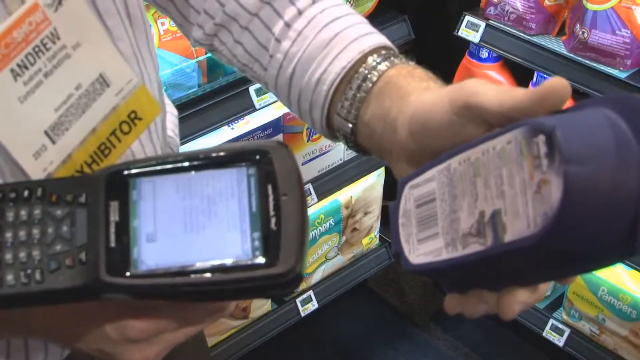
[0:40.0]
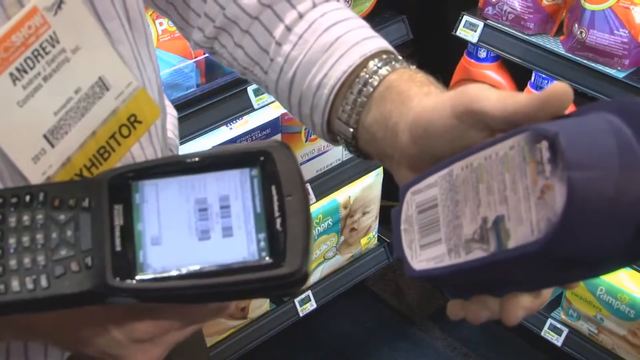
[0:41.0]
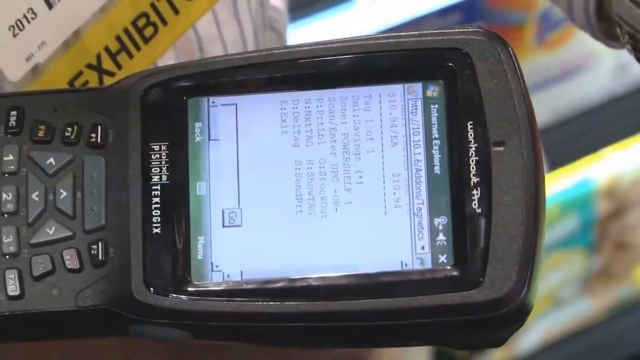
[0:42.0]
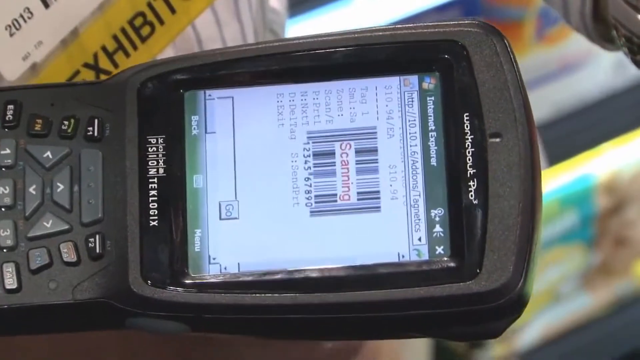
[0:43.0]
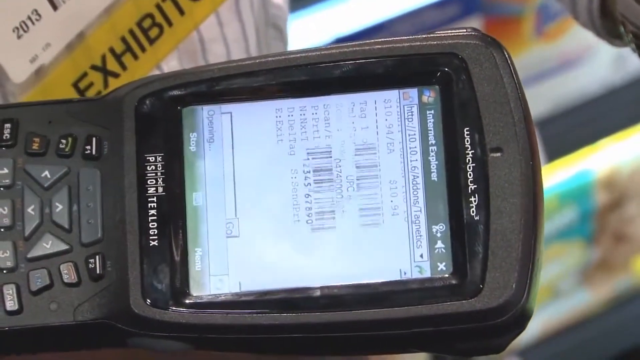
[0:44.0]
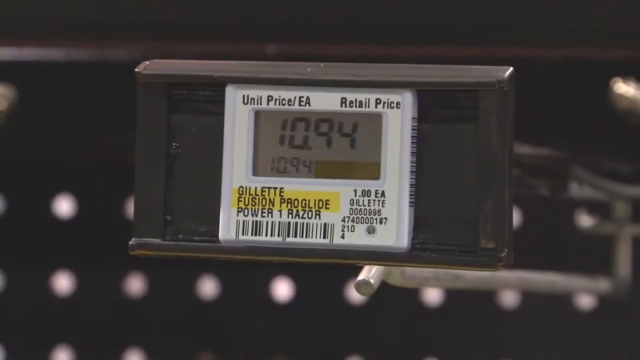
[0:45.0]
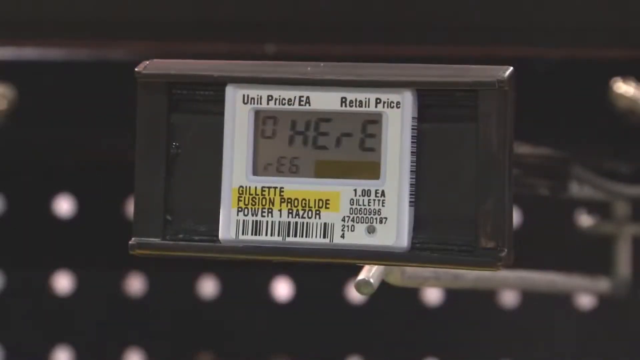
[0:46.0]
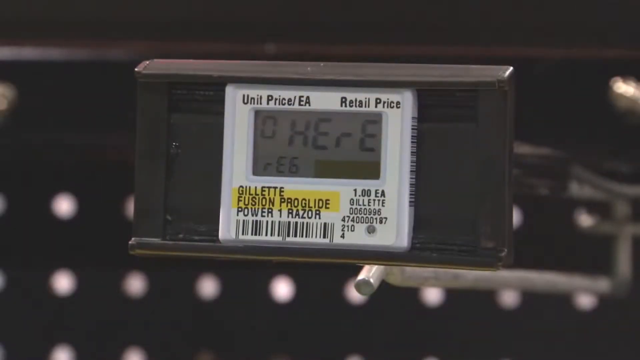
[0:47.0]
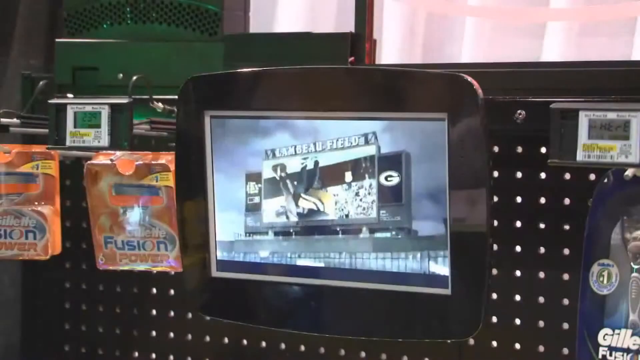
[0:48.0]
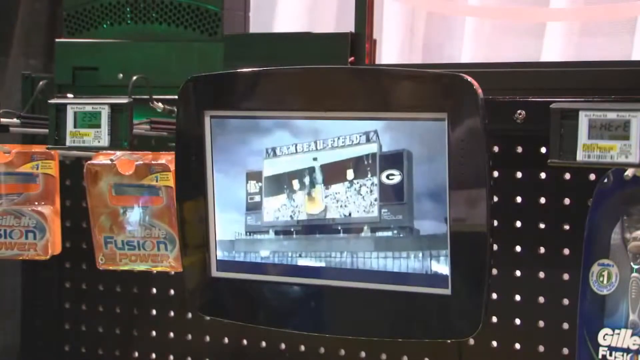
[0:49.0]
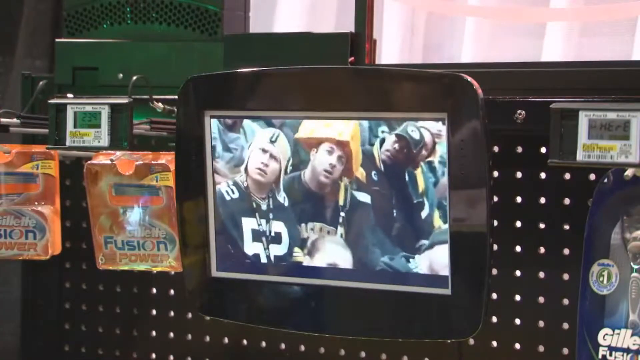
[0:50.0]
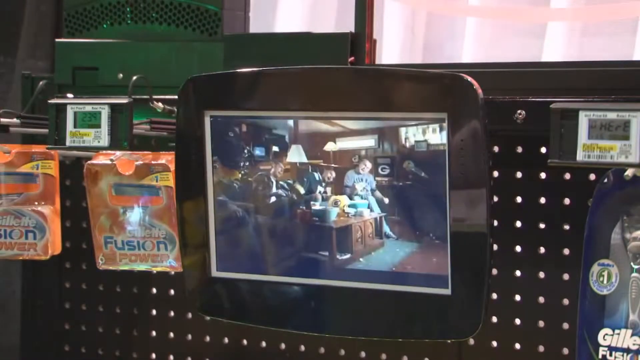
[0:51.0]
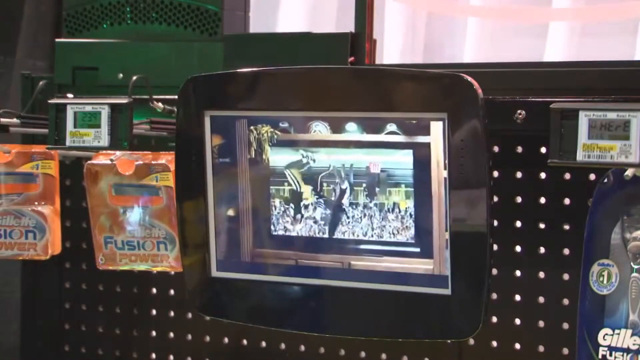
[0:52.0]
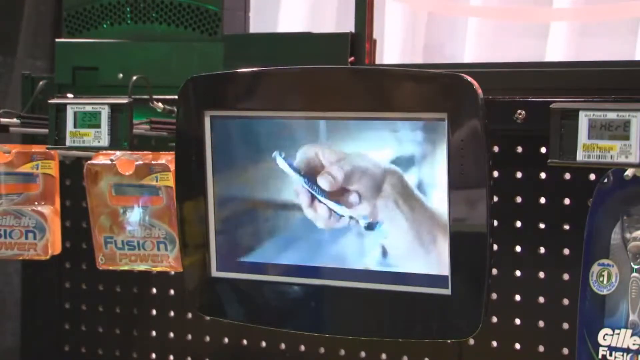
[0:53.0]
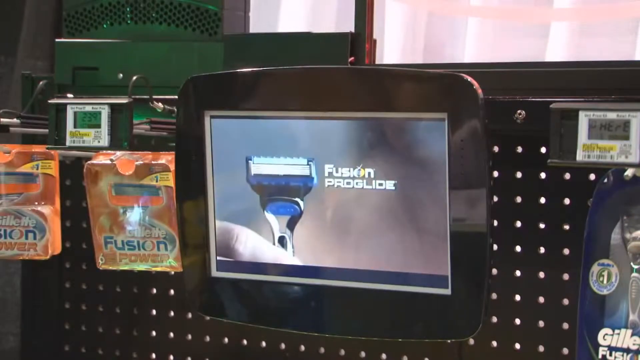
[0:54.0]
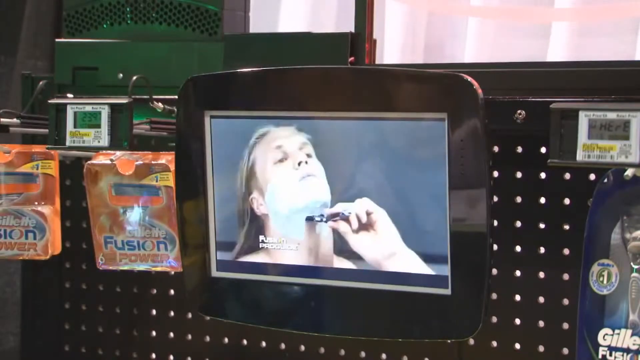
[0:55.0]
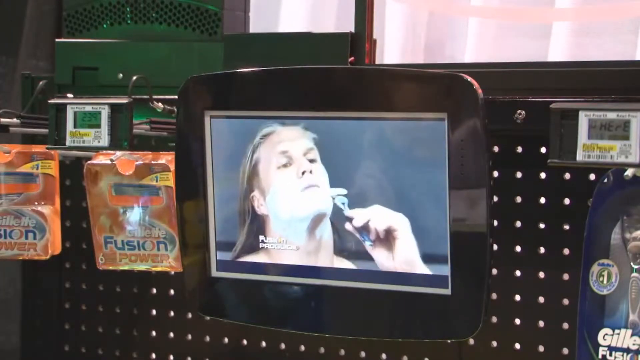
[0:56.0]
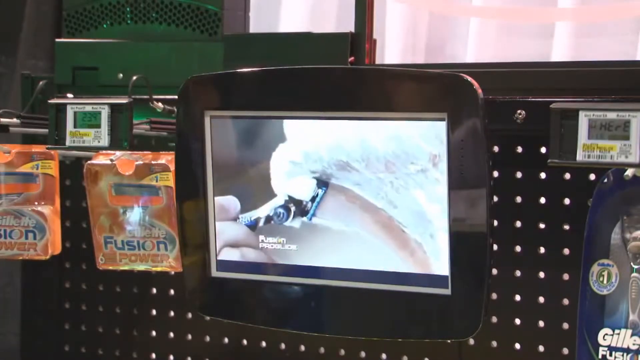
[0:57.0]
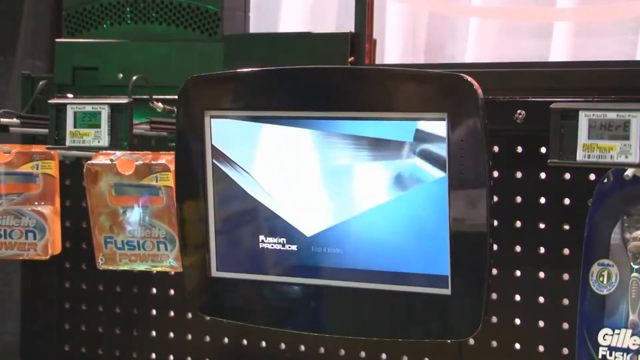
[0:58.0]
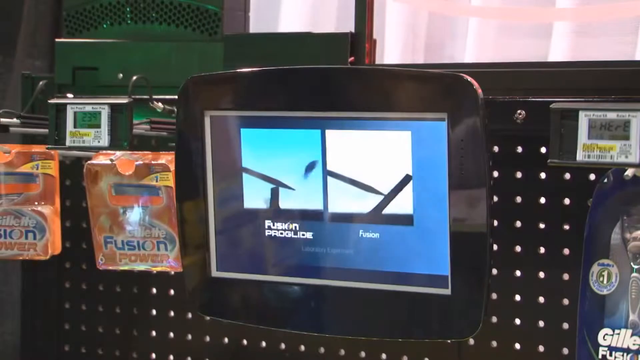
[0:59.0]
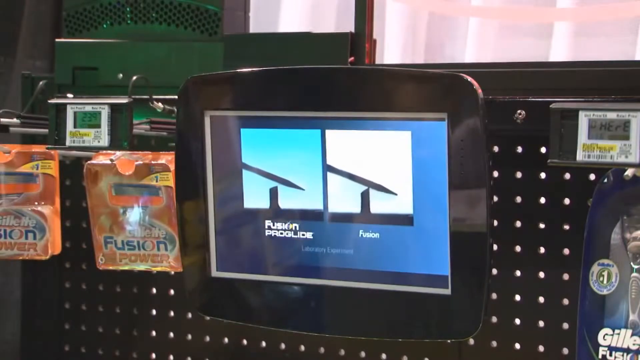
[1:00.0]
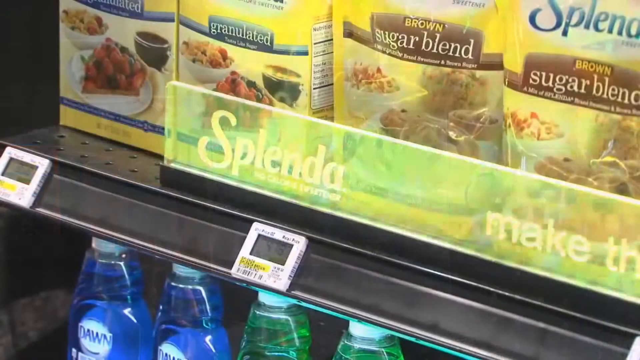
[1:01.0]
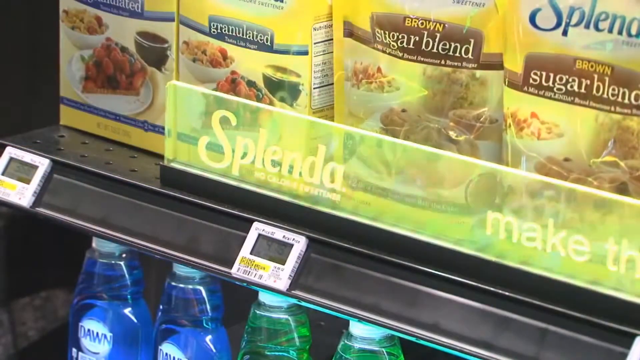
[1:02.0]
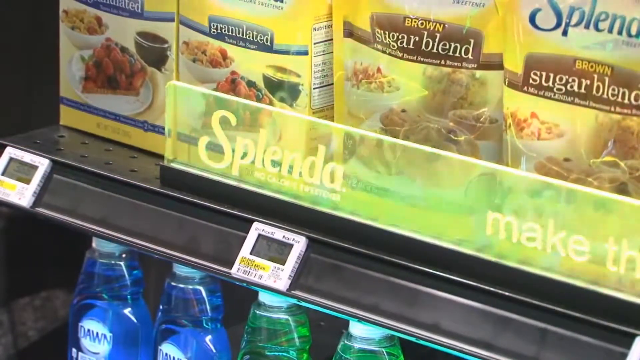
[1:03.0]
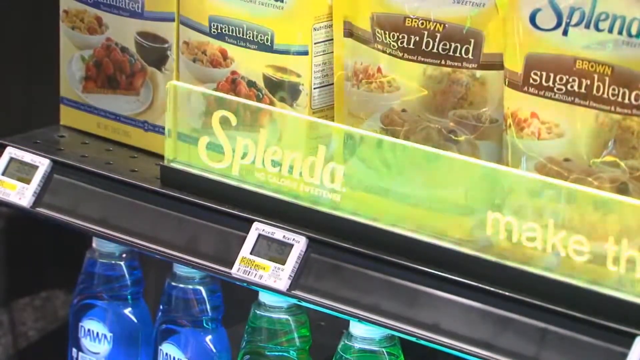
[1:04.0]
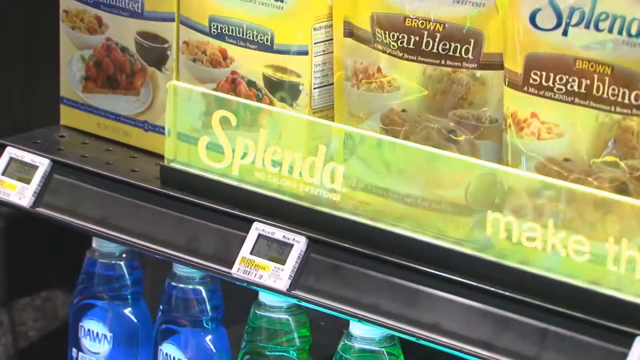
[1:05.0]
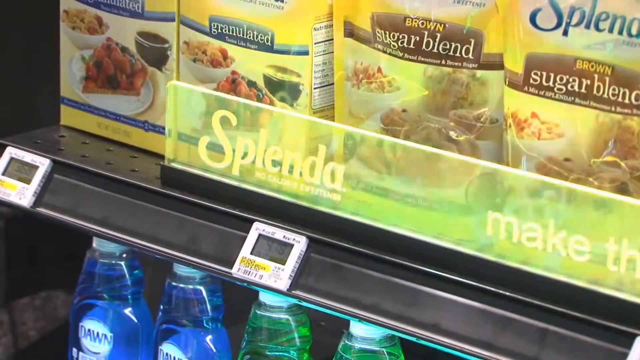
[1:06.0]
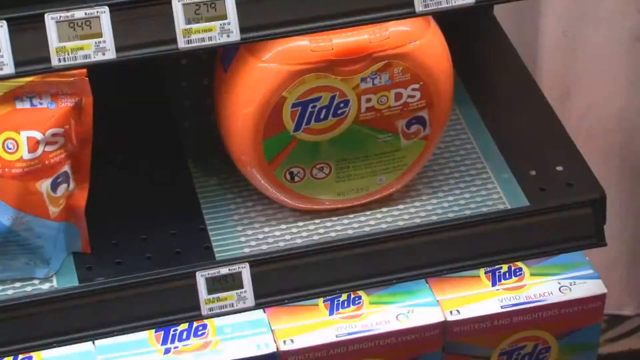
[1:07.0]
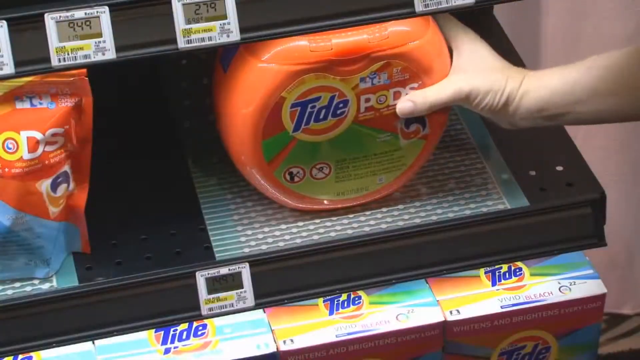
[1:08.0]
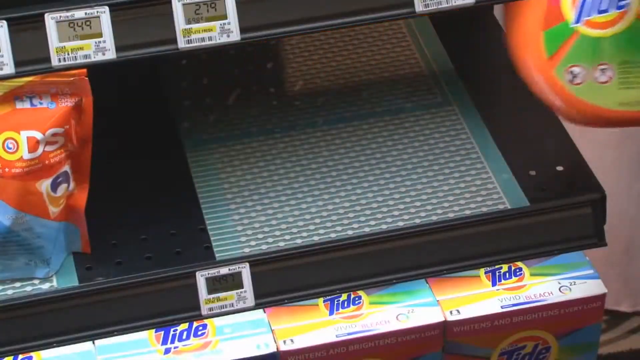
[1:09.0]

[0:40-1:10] The woman appears to push a button on the scanner, which seems to scan the barcode on the back of the item. The screen on the machine changes, and the camera zooms in somewhat on the screen, showing a side view of the information. It is a little blurry and unreadable, but a screen with some information is visible, then the word "scanning" suddenly pops up along with a barcode, followed by a UPC and its number. The camera then cuts to a close-up of the label on one of the shelves, most likely where the product came from, which says "Gillette Fusion ProGlide Power One Razor". The information on a small screen above the label changes and now says zero, seemingly the result of scanning the item; this small screen on the end cap of the hook indicates that no items are left on that hook. A small television in the center of the hooks is then shown.